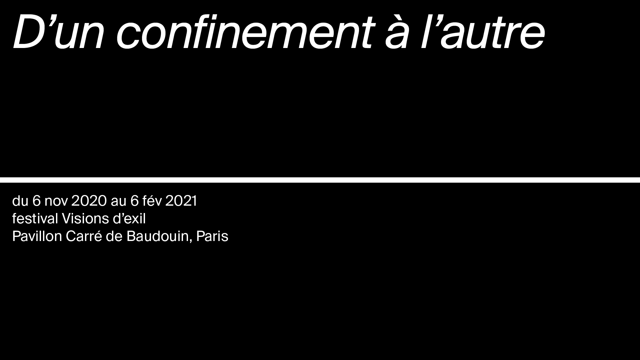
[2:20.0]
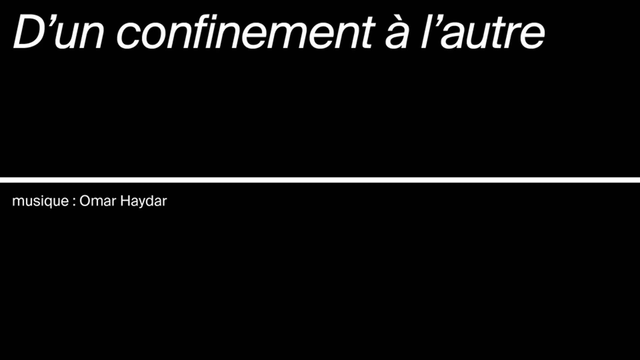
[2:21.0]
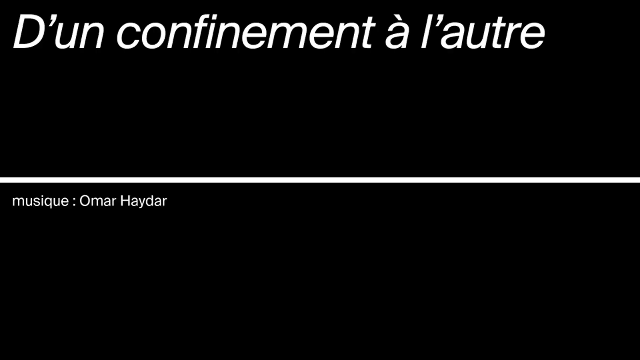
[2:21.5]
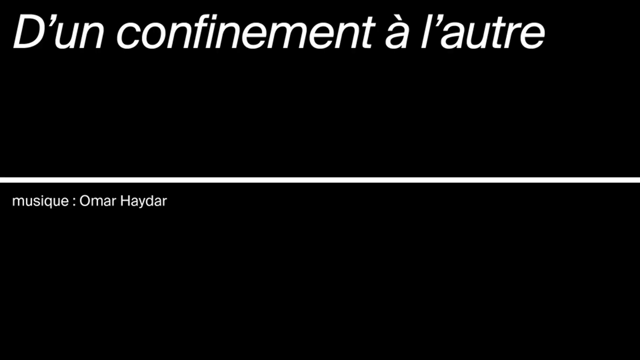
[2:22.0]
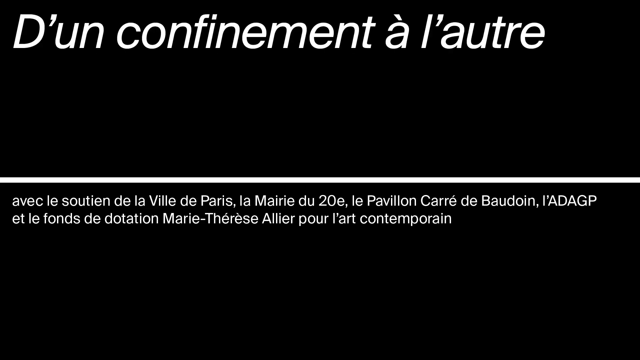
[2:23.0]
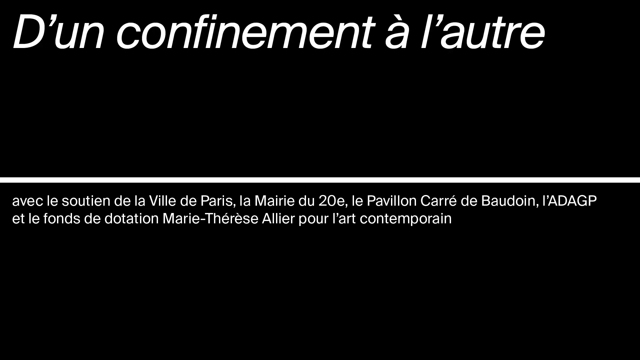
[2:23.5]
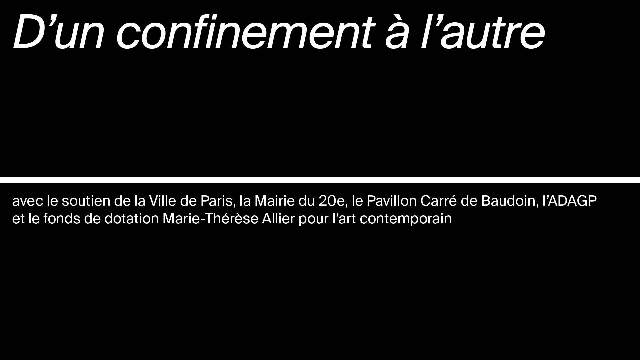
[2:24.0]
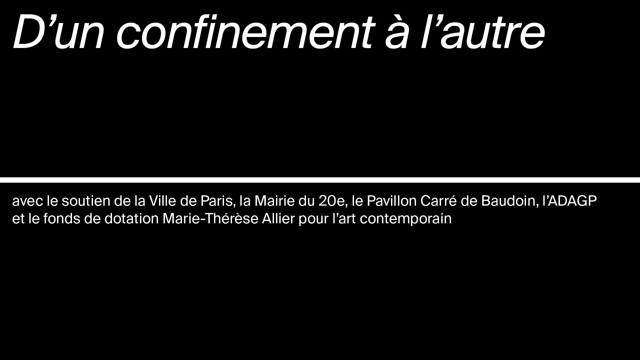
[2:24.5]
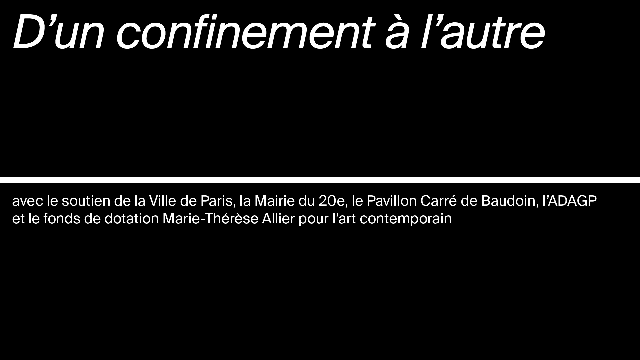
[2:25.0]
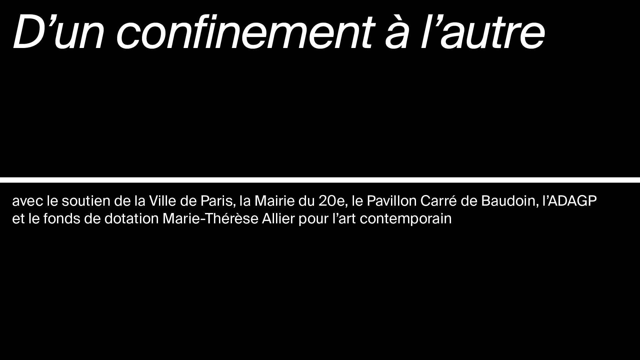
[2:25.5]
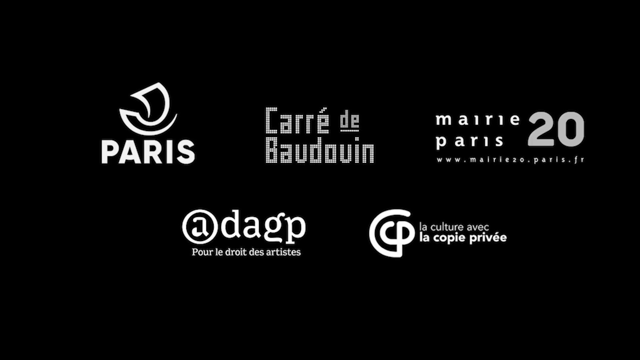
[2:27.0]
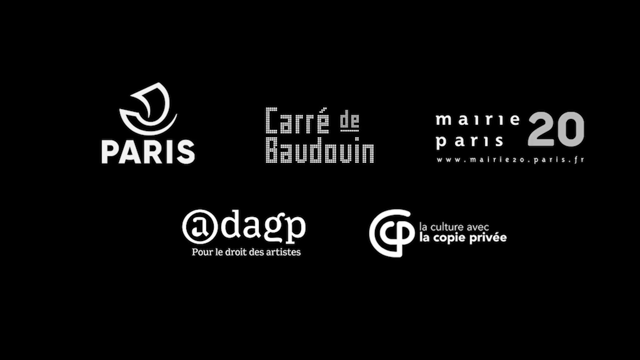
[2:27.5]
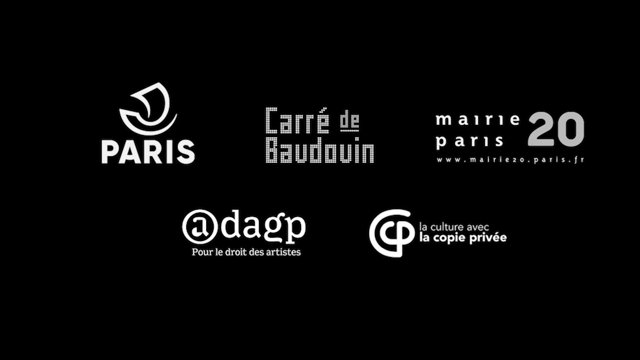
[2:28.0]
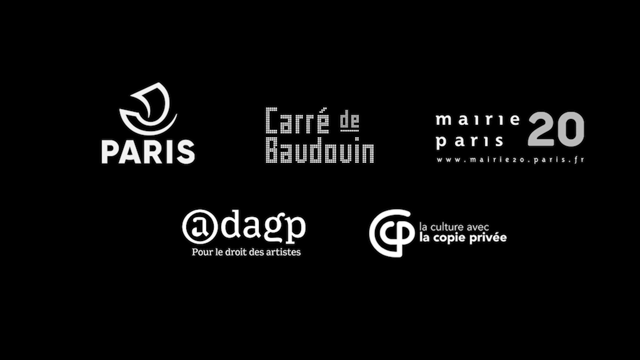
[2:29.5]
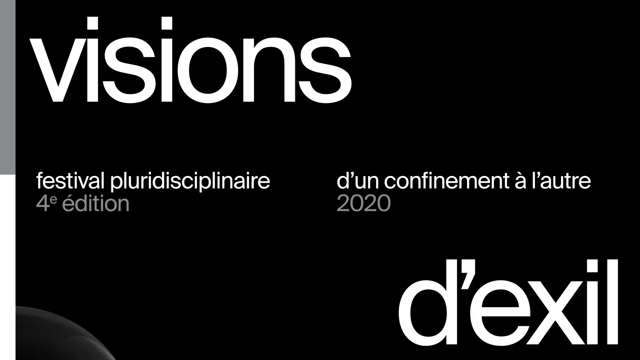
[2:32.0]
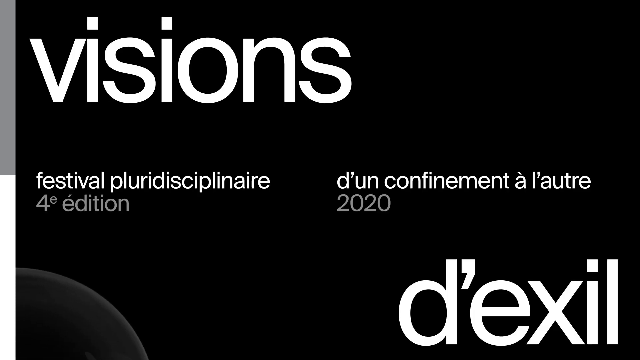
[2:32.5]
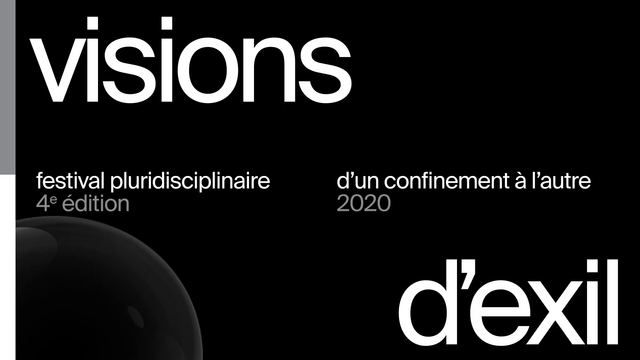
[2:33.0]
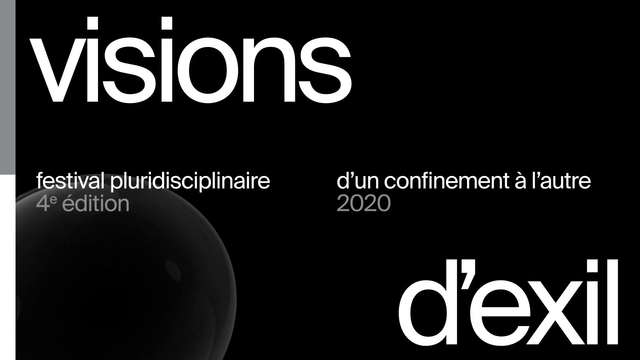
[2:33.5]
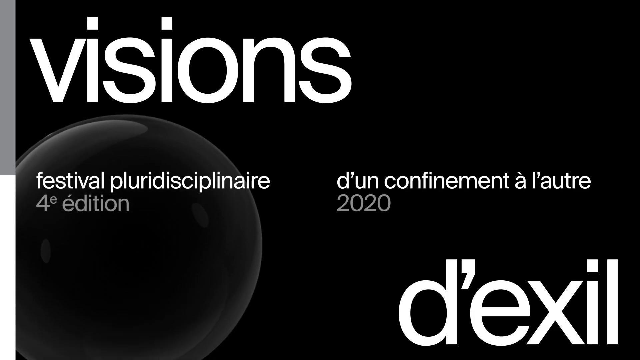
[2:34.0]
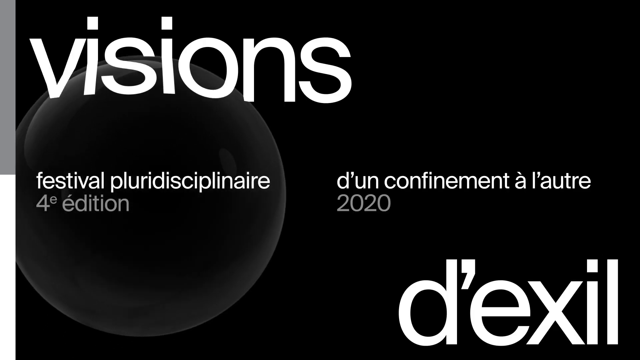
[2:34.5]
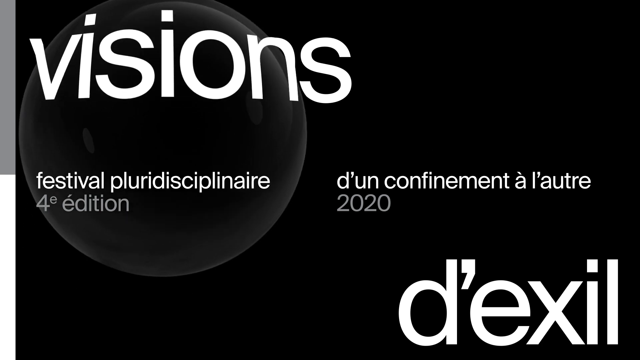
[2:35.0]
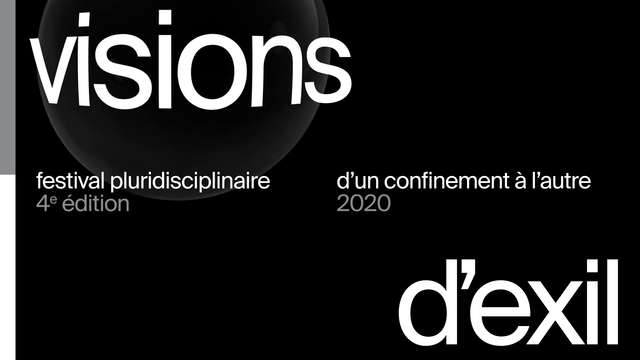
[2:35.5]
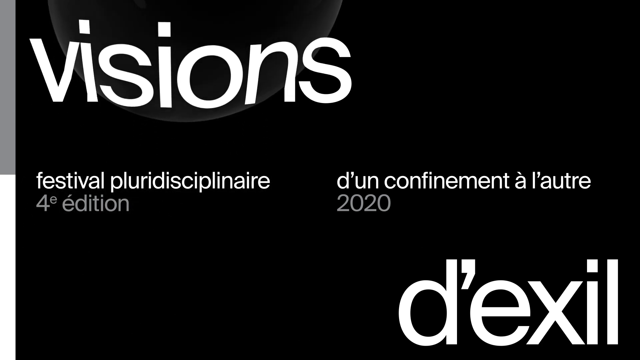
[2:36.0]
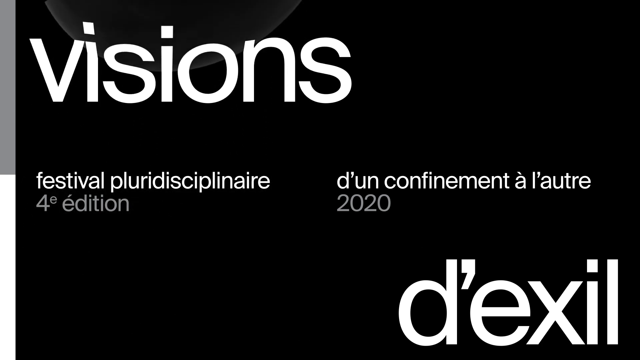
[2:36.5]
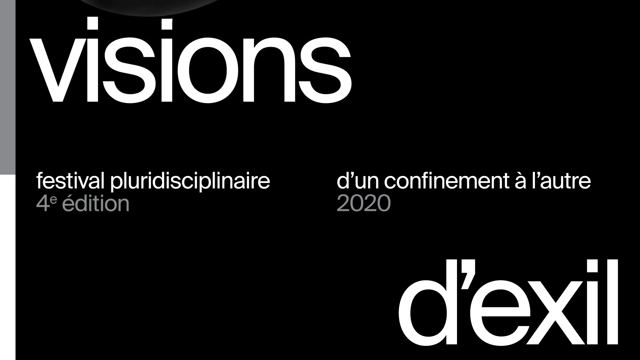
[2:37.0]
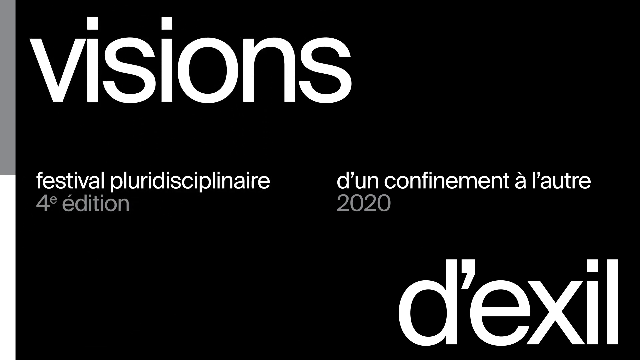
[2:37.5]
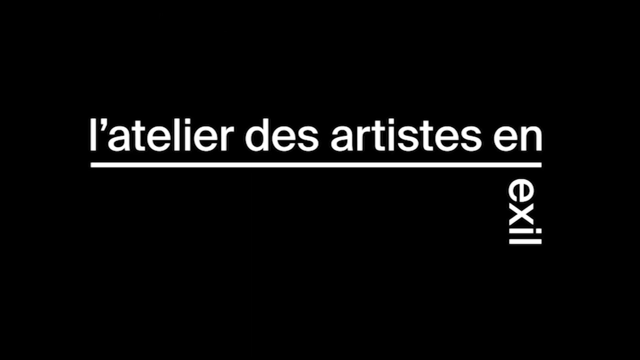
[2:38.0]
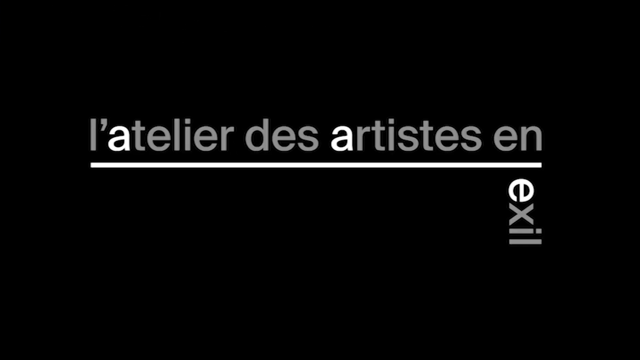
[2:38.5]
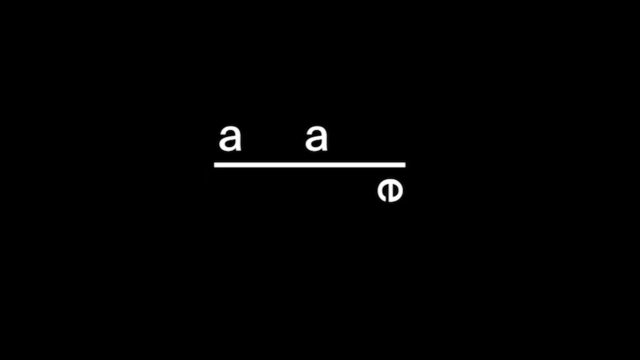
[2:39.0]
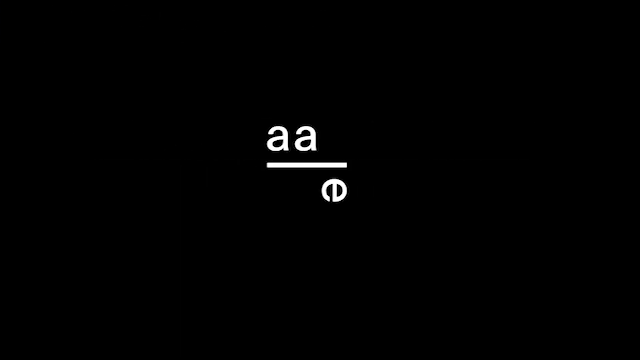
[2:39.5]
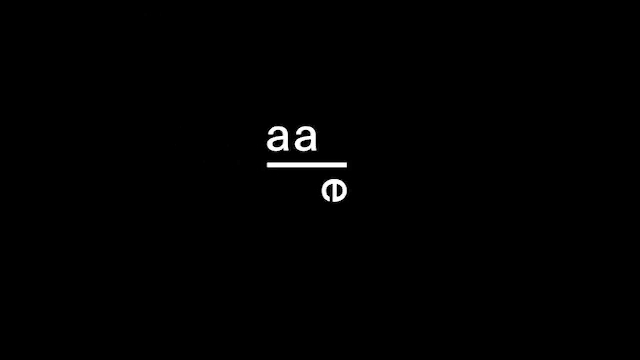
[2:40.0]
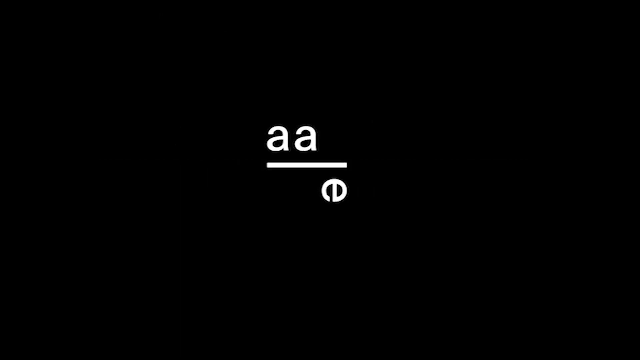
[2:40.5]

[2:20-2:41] Ending credits in a different language appear, looking like a wrap-up of the video that credits different areas and people who may have sponsored it. Potentially five different sponsors are shown, then Visions, then what look like two different production companies, and finally the people who made the video.